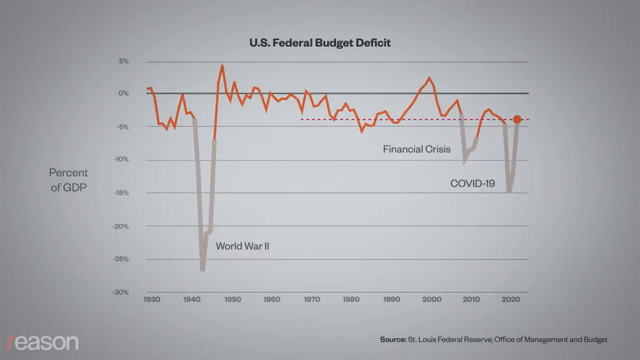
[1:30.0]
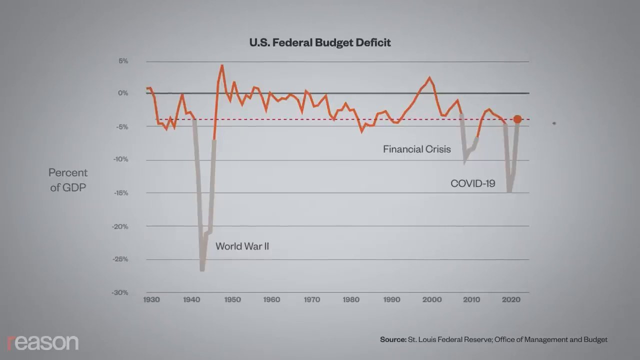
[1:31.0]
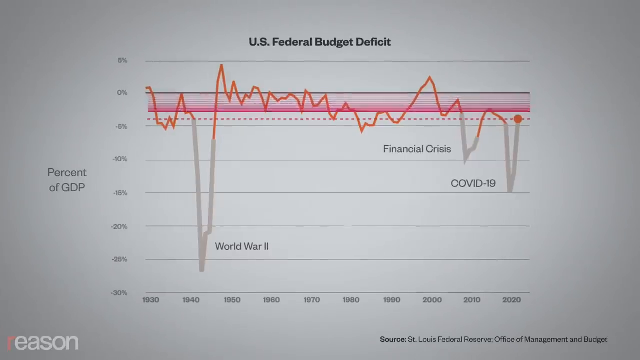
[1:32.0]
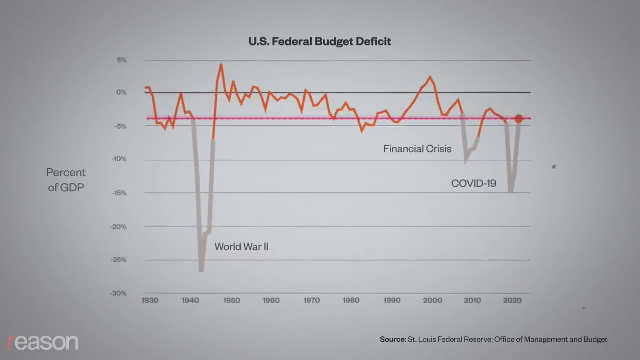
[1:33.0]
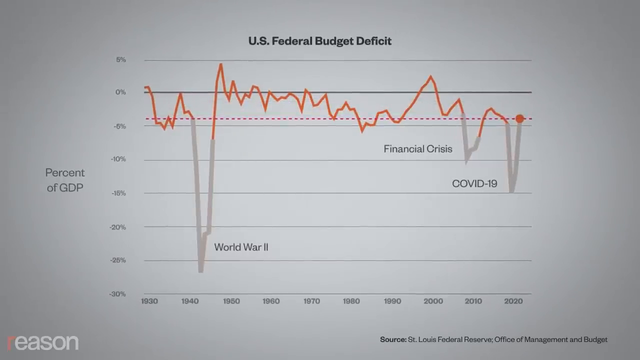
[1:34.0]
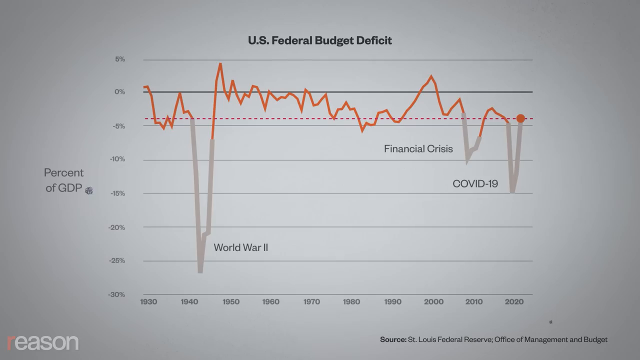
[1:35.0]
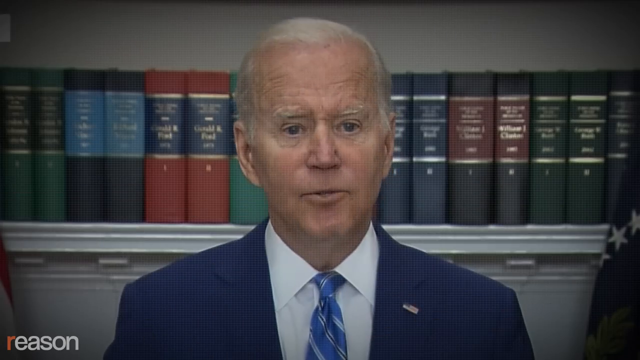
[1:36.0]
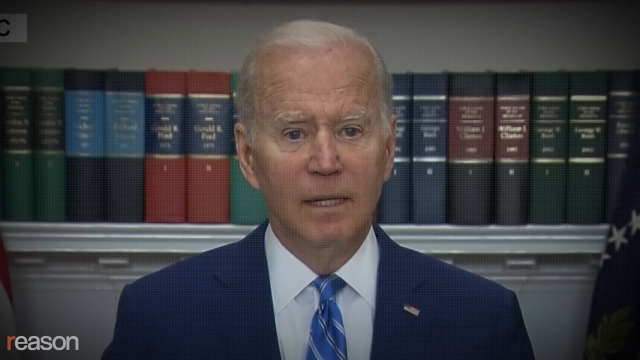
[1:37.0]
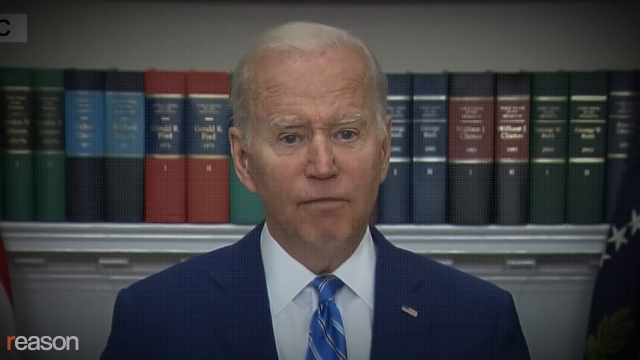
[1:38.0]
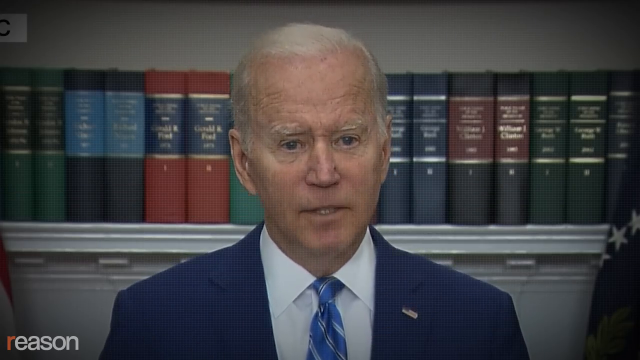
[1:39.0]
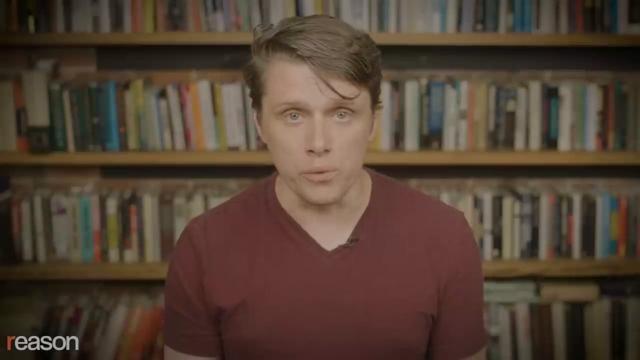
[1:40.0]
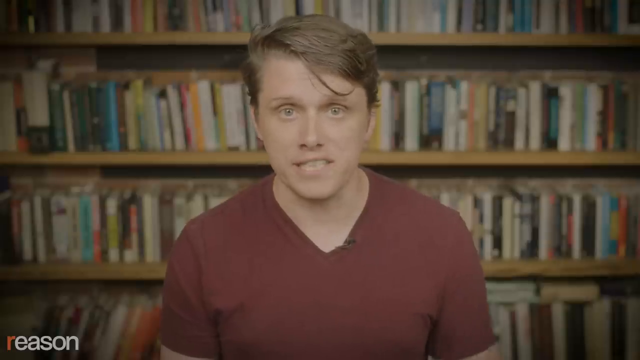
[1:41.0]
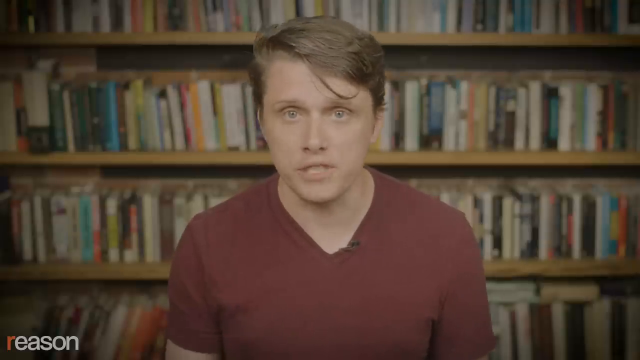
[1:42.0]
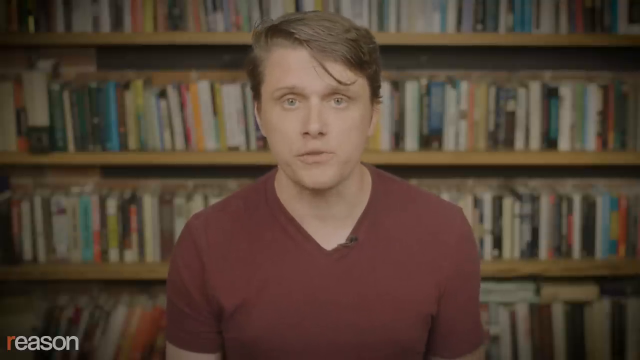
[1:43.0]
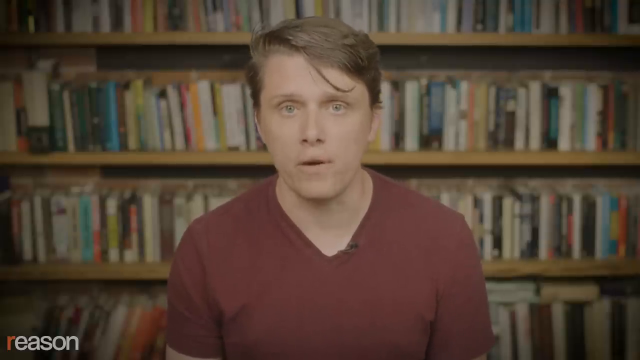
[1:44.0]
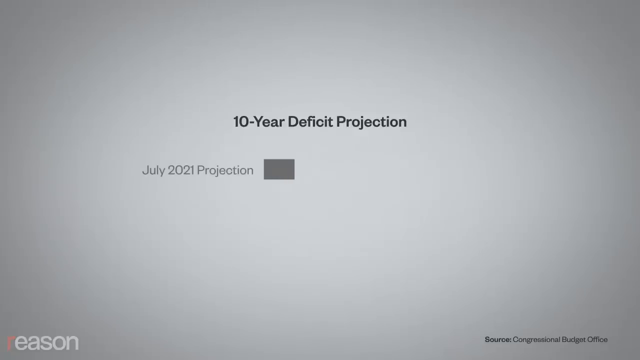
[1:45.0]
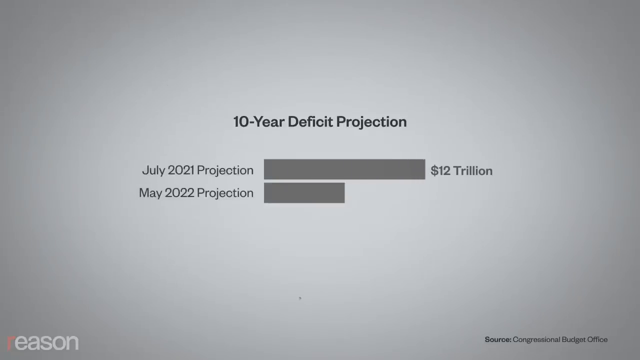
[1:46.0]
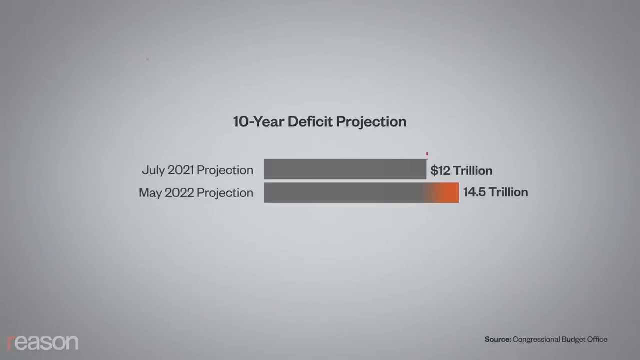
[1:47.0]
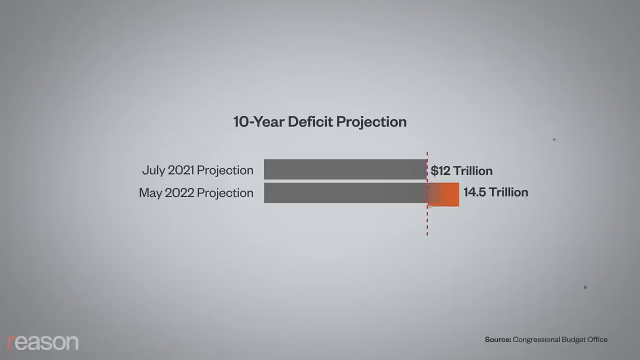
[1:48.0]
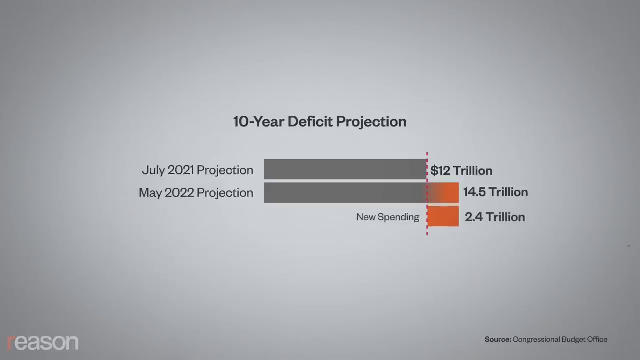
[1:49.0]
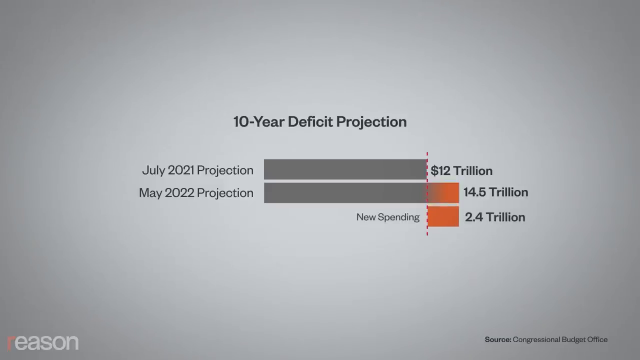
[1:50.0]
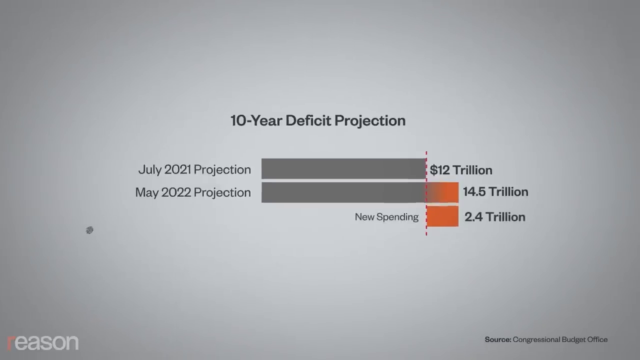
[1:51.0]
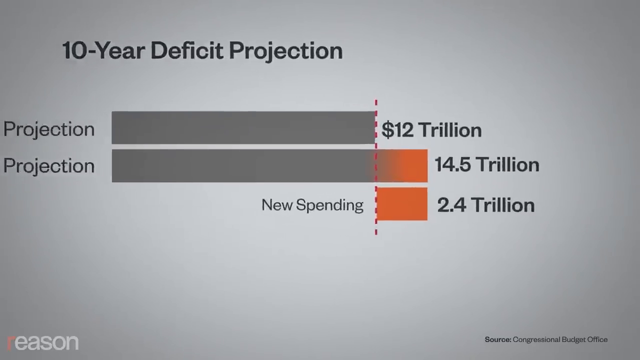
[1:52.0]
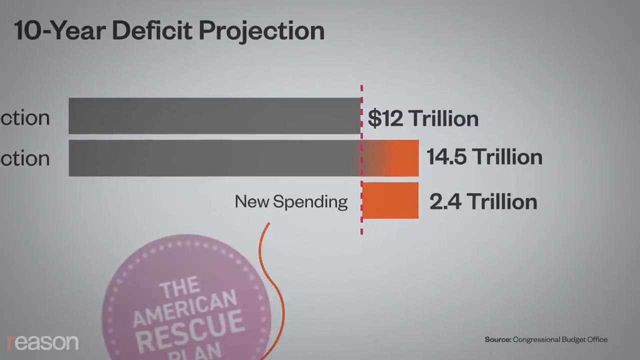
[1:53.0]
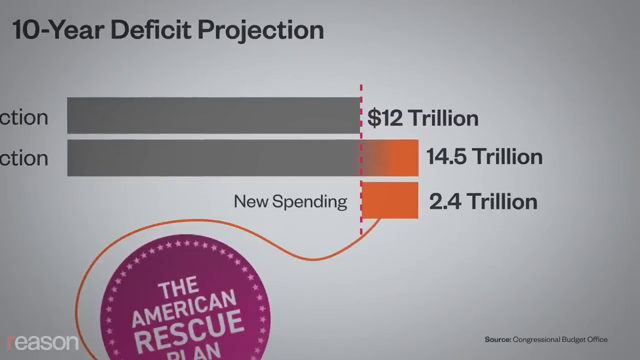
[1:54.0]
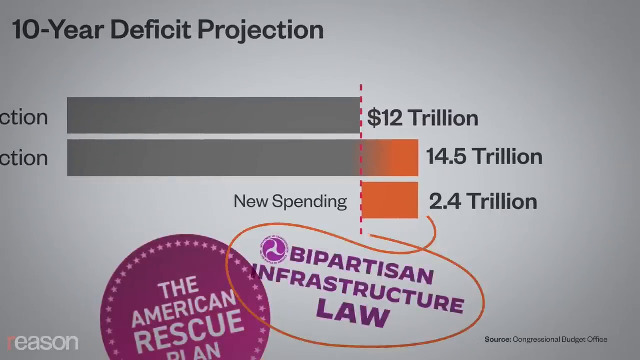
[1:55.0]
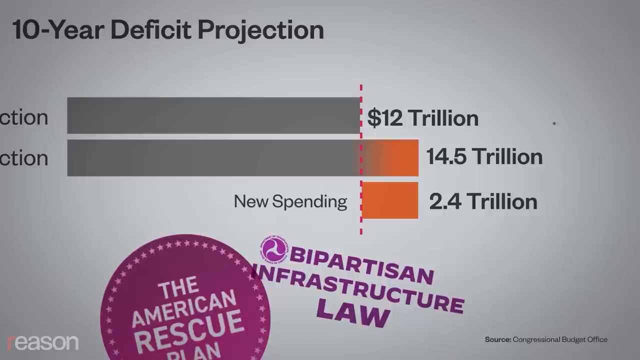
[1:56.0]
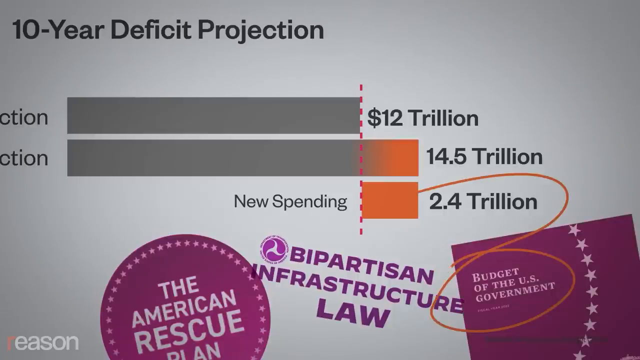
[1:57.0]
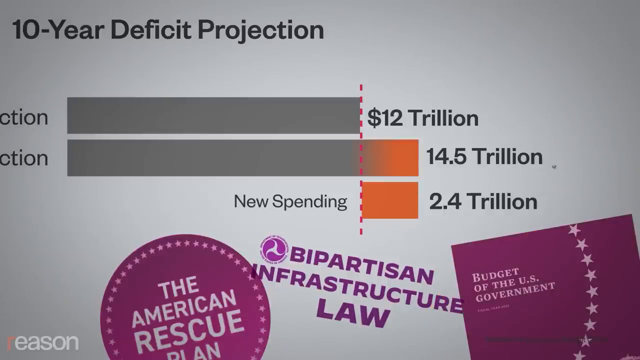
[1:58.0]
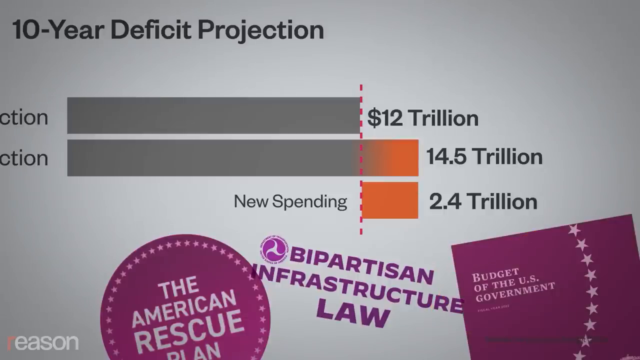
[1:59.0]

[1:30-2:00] After a brief green screen, the line graph appears for a moment, then the video shows President Biden briefly in a very zoomed-in angle with books behind him. It returns to Eric in the same spot with books behind him. Next comes a 10-year deficit projection in a much smaller bar-chart-type graph, shown fairly quickly. It shows projections for July 2021 and May 2022, with 12 trillion for July, 14.5 for the following one, and a 2.4 trillion difference. At the bottom are a couple of images that look like stickers on a purple background, one saying "bipartisan infrastructure".